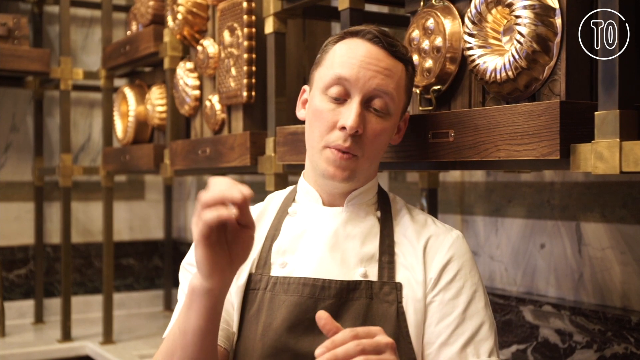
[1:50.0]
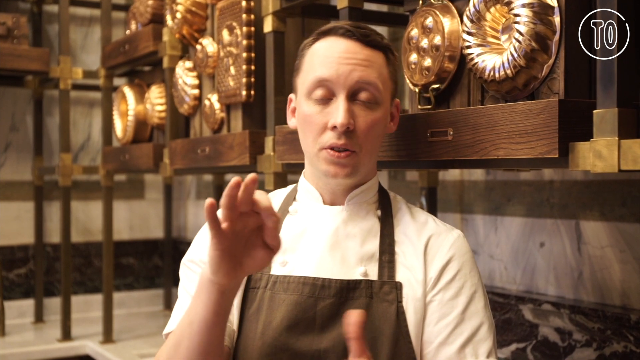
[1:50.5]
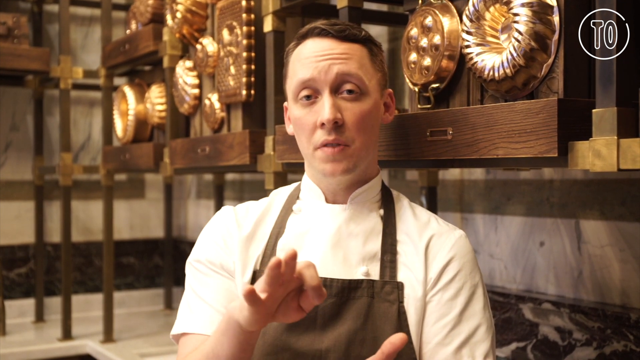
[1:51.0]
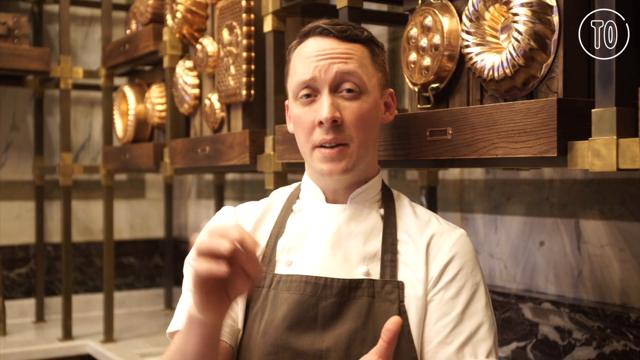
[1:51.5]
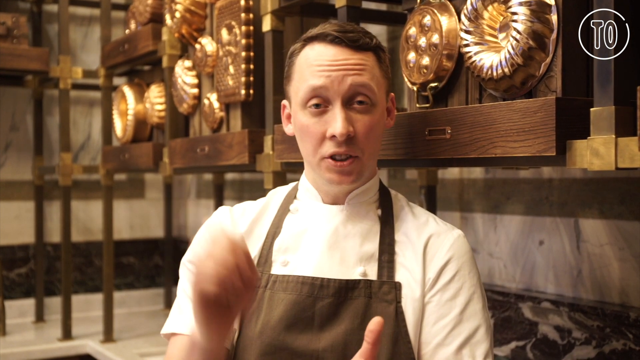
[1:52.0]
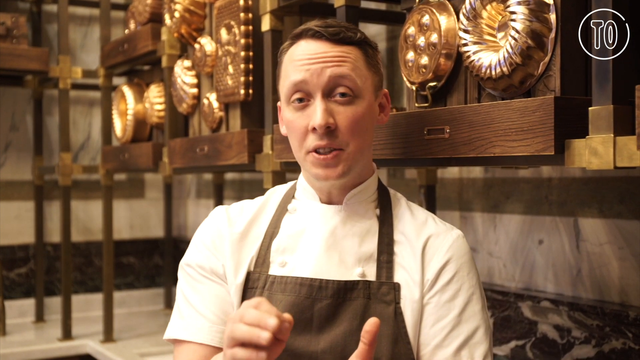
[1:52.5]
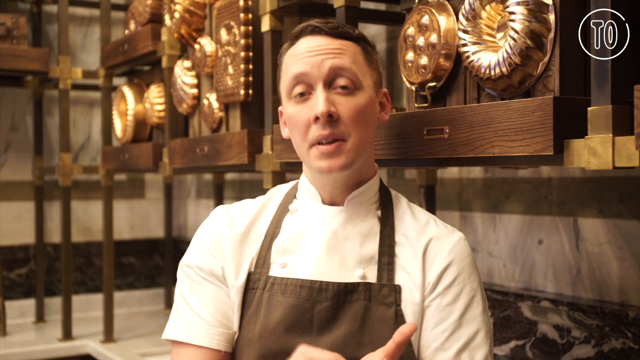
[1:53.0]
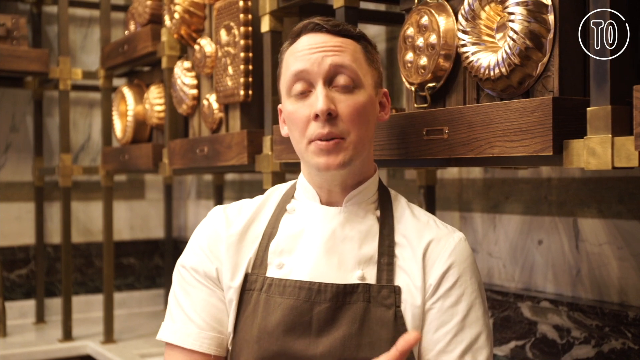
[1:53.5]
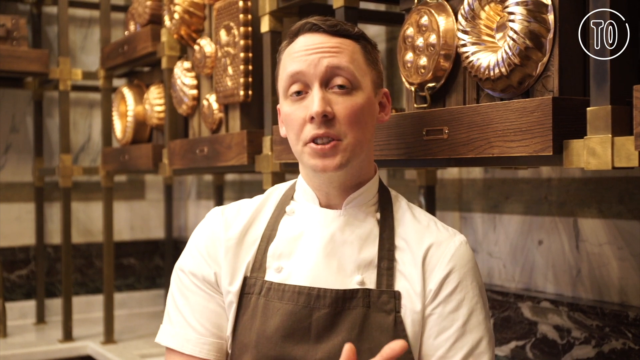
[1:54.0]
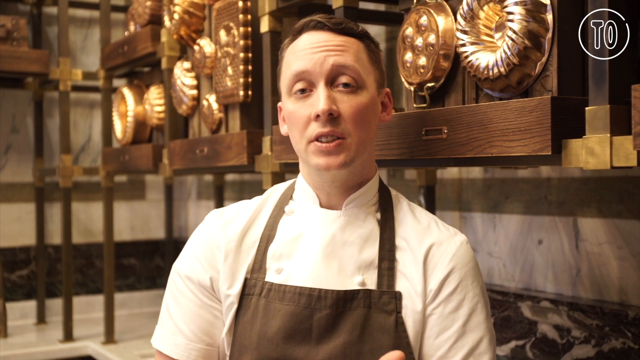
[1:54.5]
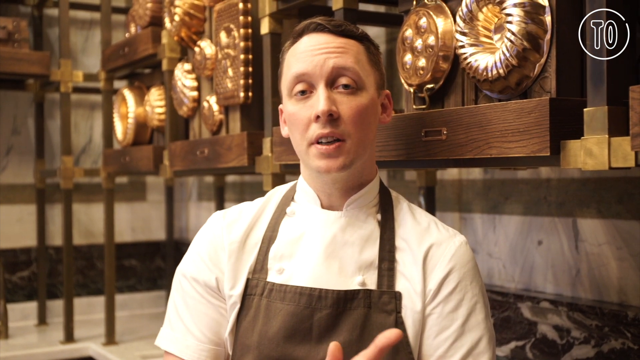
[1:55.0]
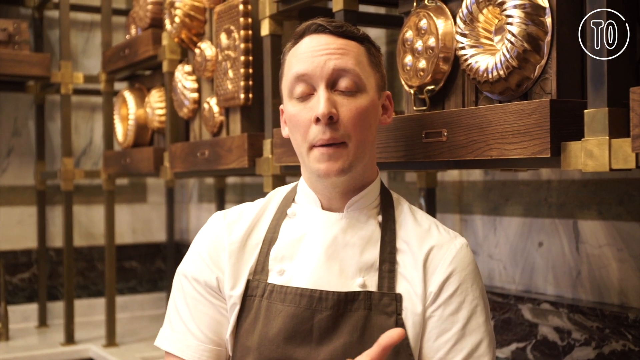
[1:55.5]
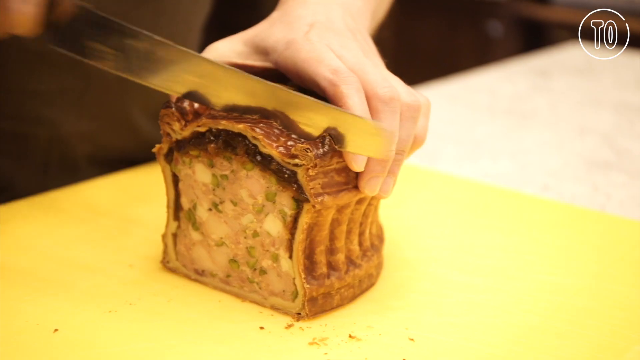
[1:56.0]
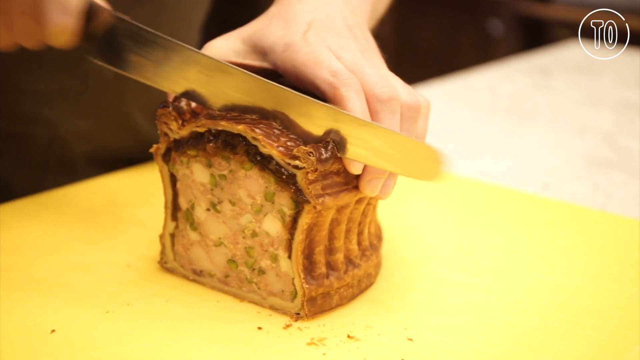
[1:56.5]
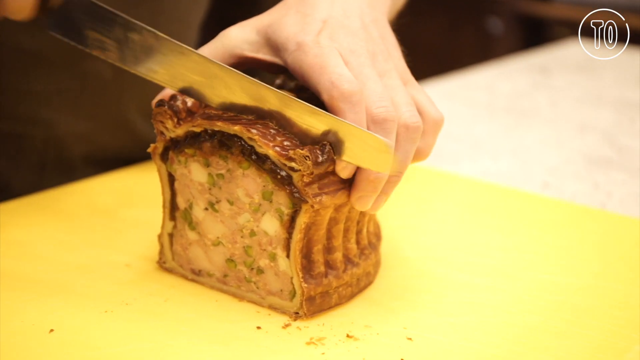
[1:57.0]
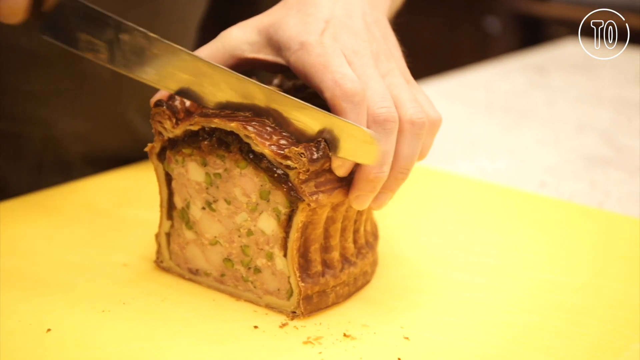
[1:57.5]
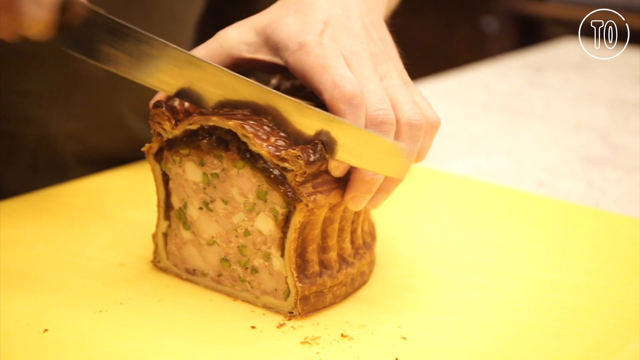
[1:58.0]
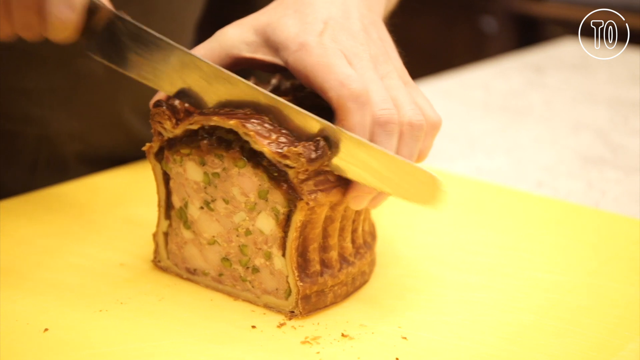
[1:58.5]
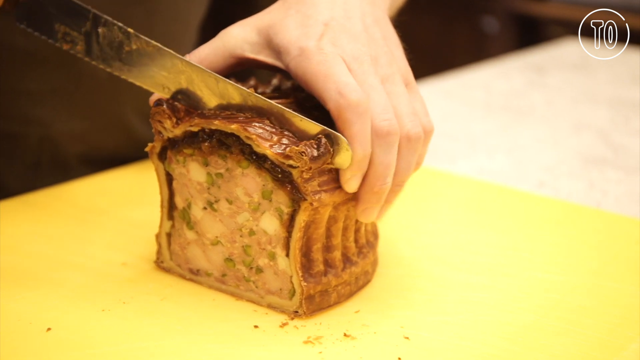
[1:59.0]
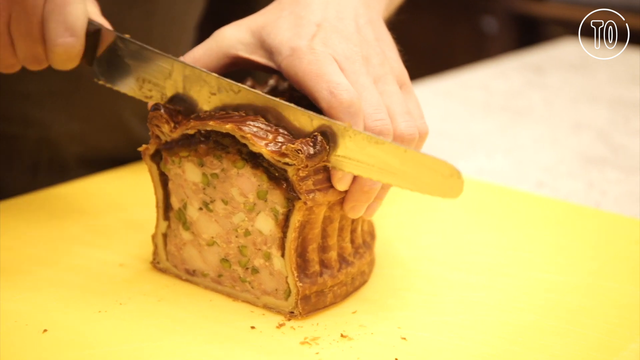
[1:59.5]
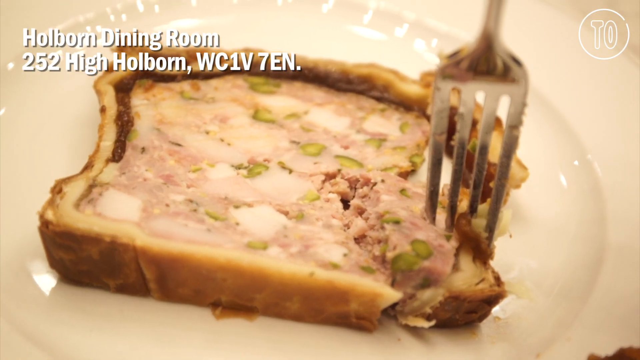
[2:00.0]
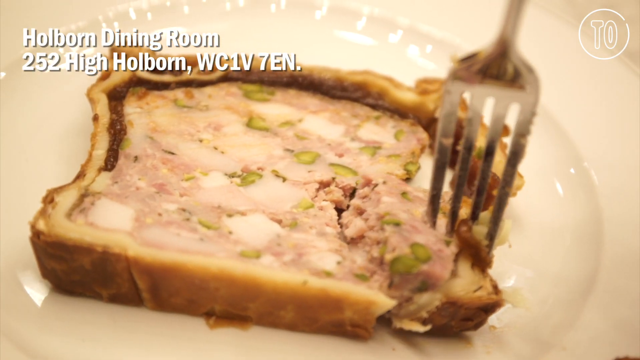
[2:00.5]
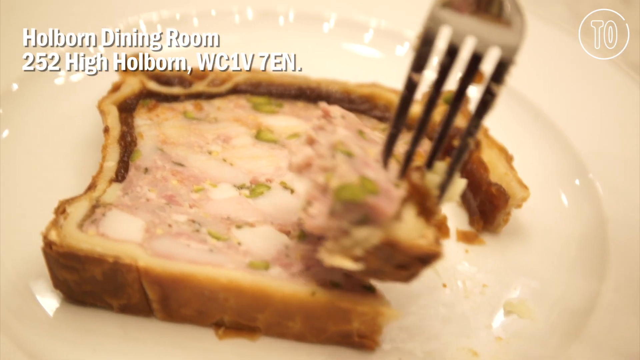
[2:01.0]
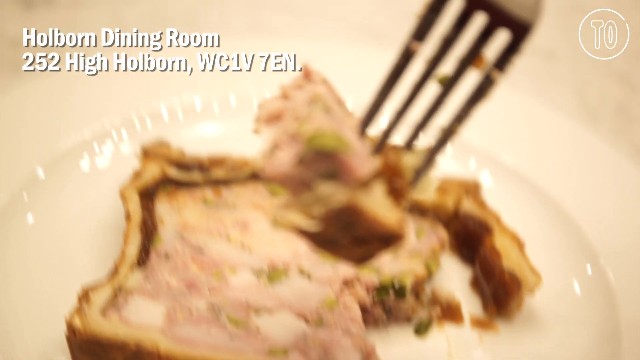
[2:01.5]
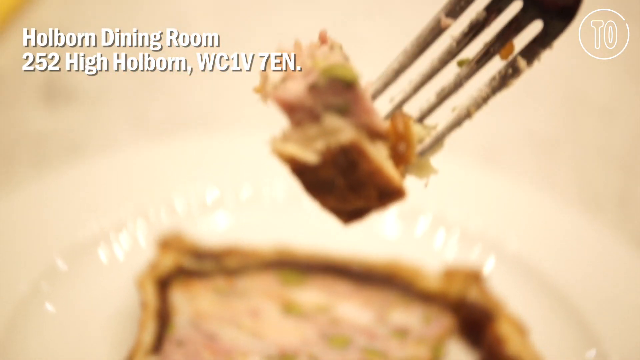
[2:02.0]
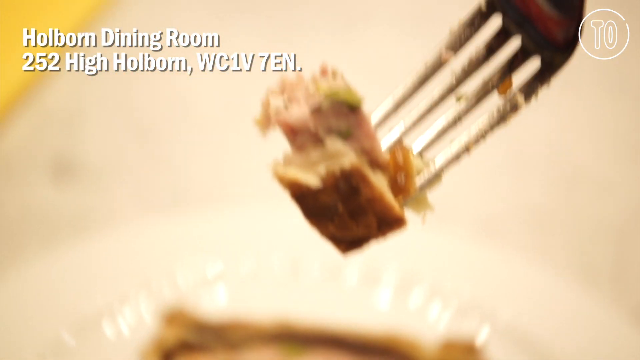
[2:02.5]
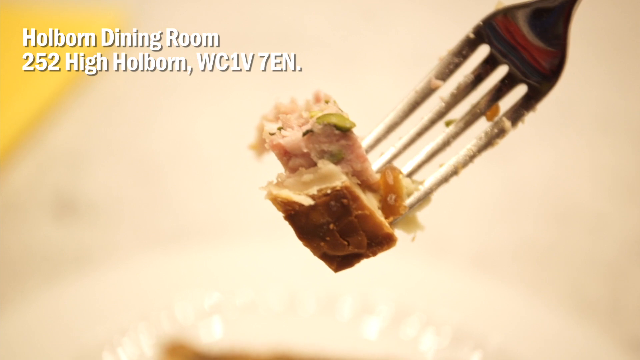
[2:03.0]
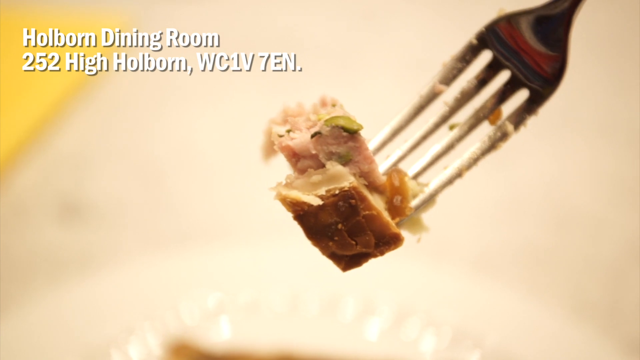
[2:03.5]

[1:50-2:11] A close-up shows one of the chefs from the midsection up. He has both hands up and is sort of making gestures as he demonstrates the process and methods used for the pies, looking directly into the camera. The scene transitions to a person's hands: the left hand holds a half slice of pie stable while the right hand uses a knife in a very slow but steady sawing motion, starting from the very top of the pie. The scene then transitions to a slice of the pie on a white plate with a fork stabbed into it. The crust is golden brown, and the inside has a pale pink, meatloaf-like color, consistency and texture. The fork breaks off a piece of the pie and meat filling and slowly rises, and the camera follows it from the bottom up toward the top of the frame.